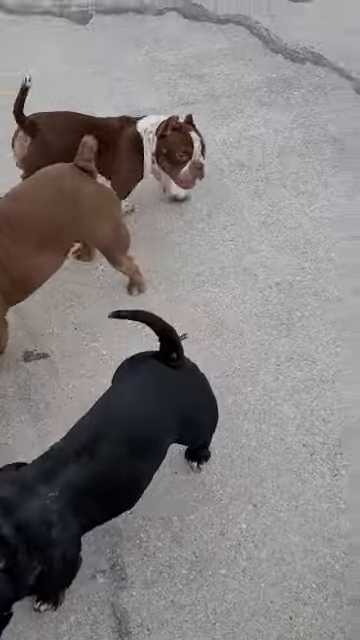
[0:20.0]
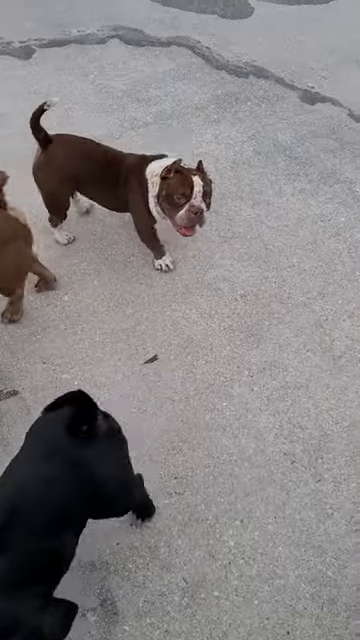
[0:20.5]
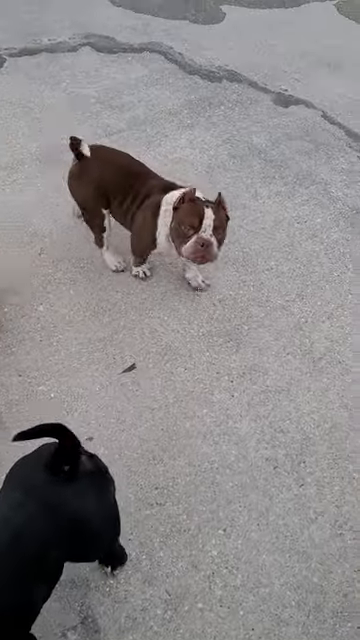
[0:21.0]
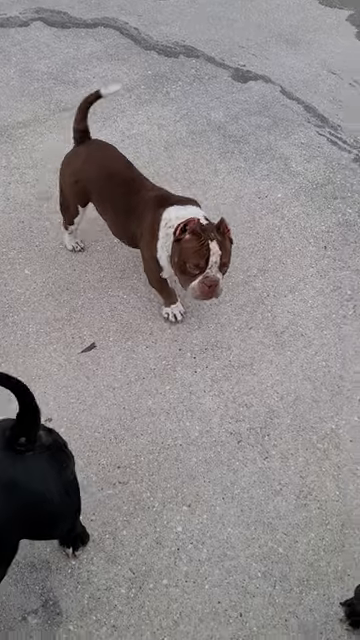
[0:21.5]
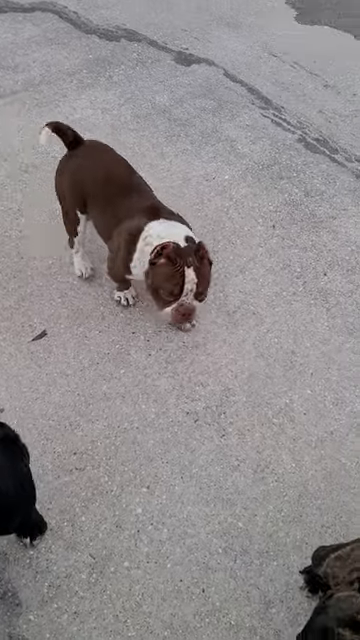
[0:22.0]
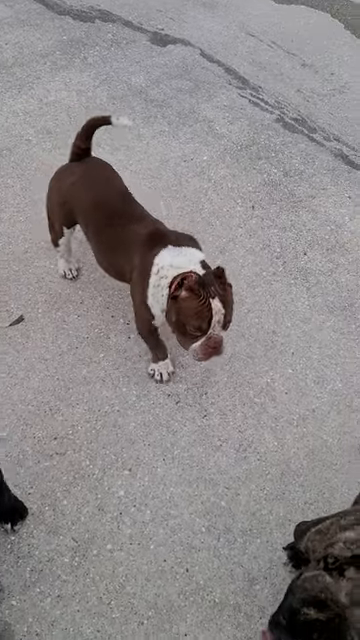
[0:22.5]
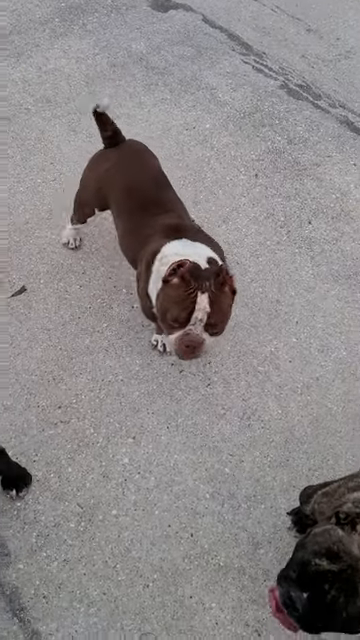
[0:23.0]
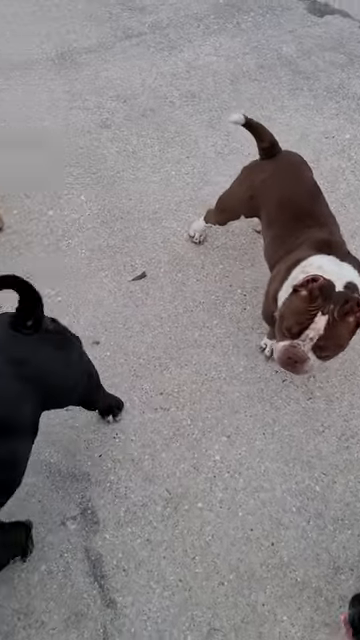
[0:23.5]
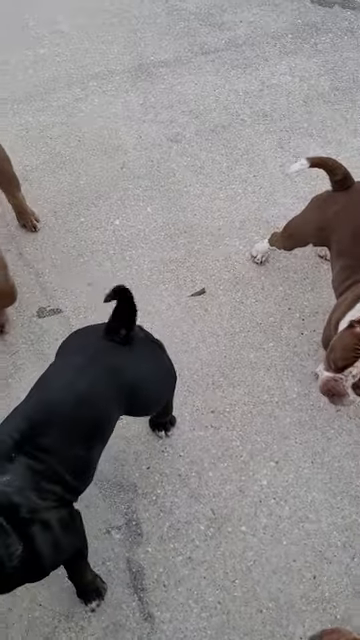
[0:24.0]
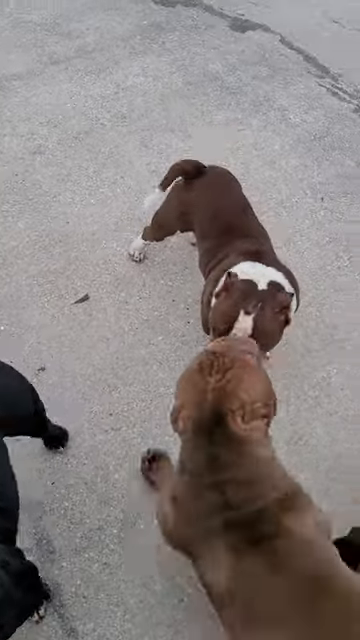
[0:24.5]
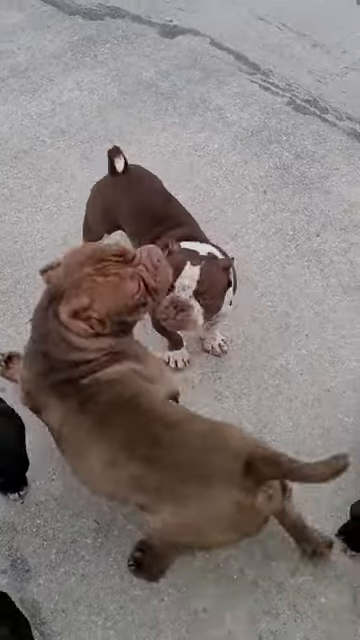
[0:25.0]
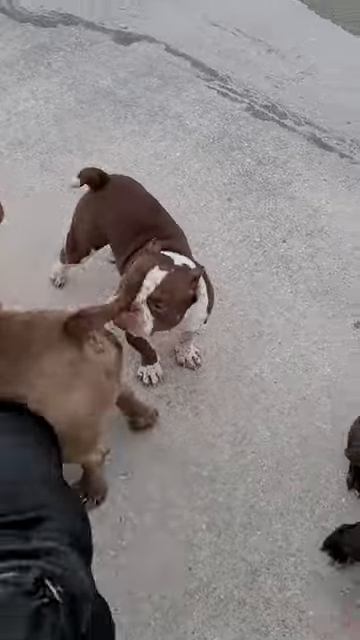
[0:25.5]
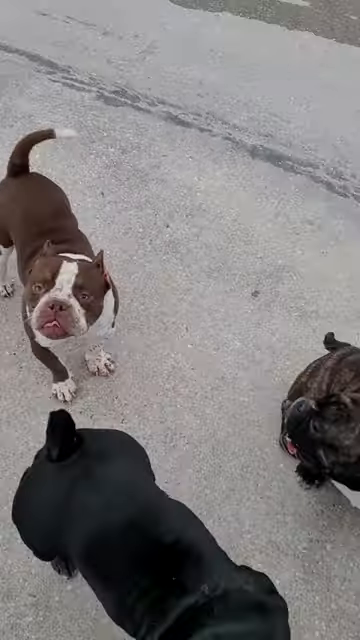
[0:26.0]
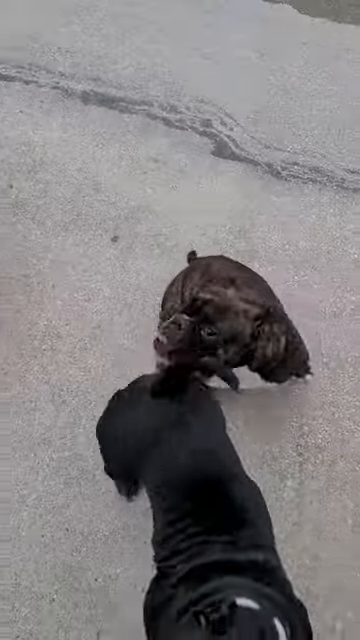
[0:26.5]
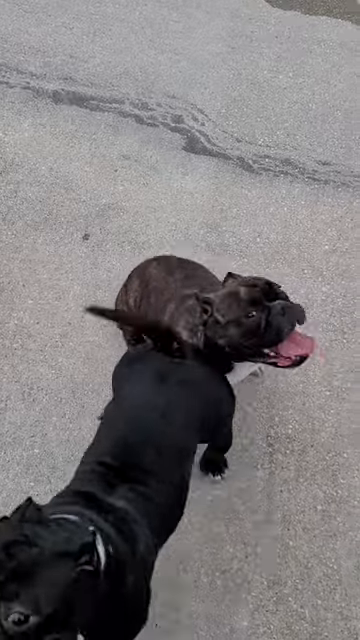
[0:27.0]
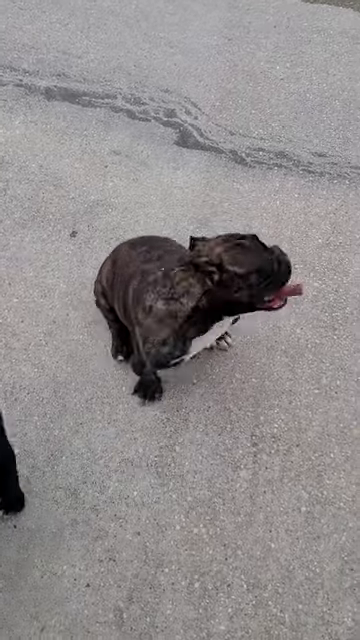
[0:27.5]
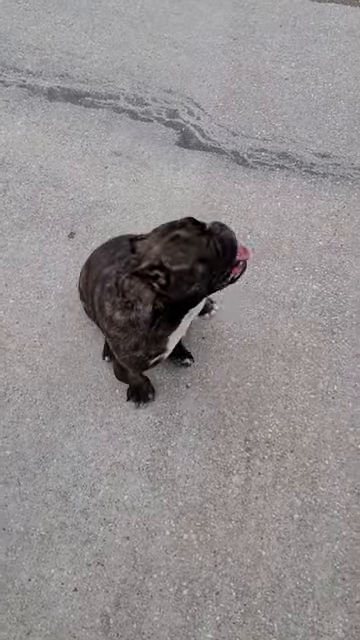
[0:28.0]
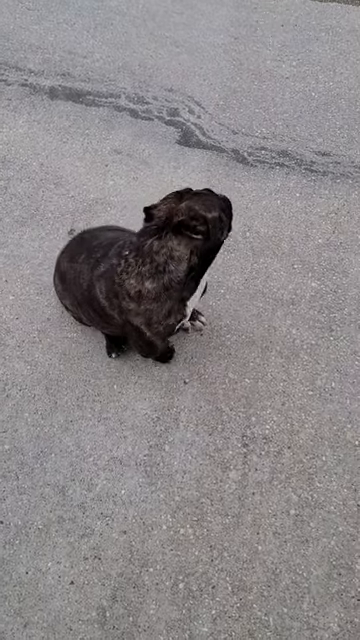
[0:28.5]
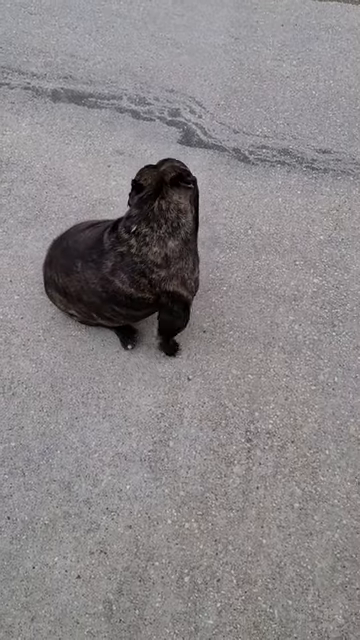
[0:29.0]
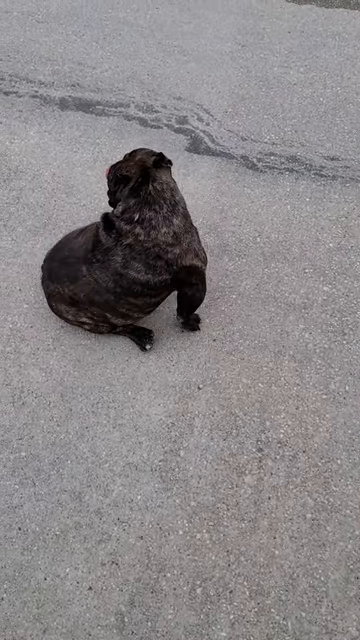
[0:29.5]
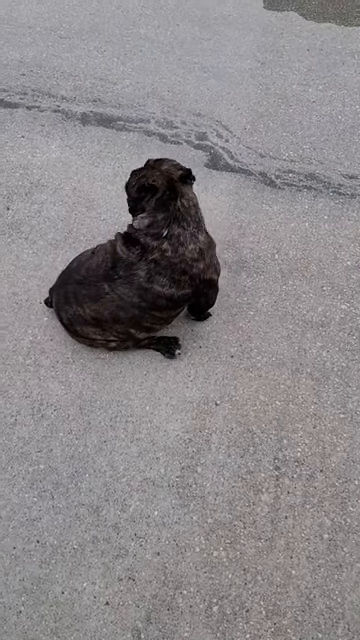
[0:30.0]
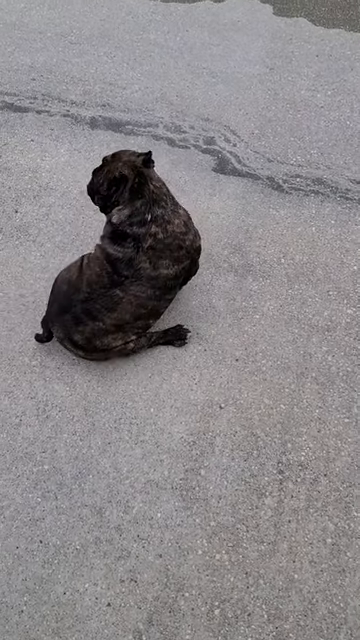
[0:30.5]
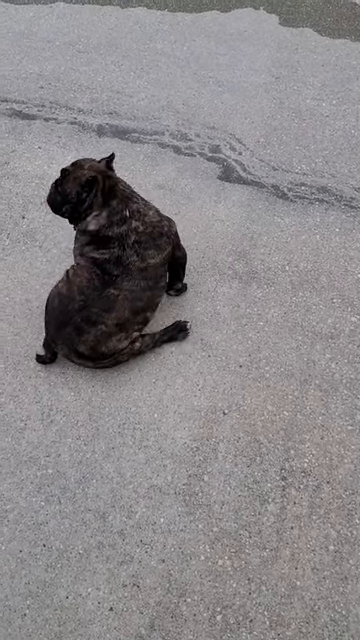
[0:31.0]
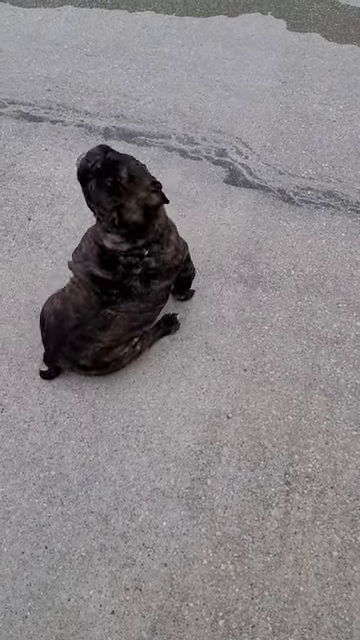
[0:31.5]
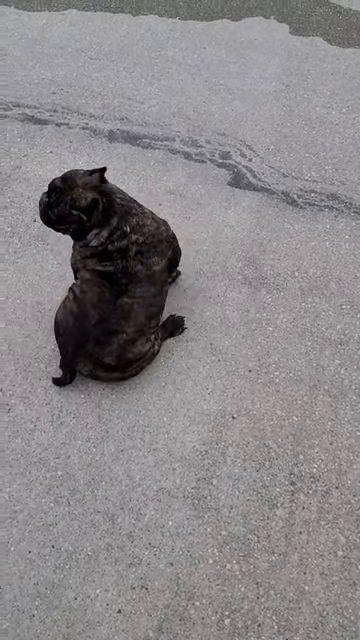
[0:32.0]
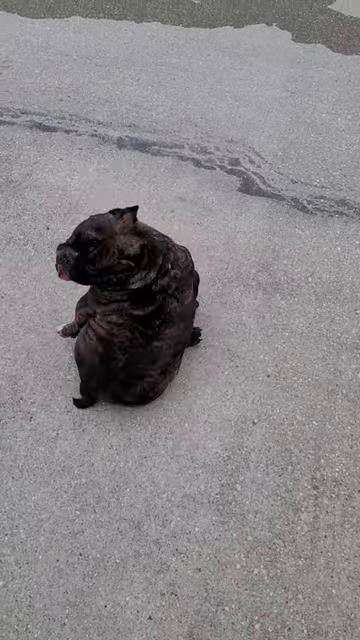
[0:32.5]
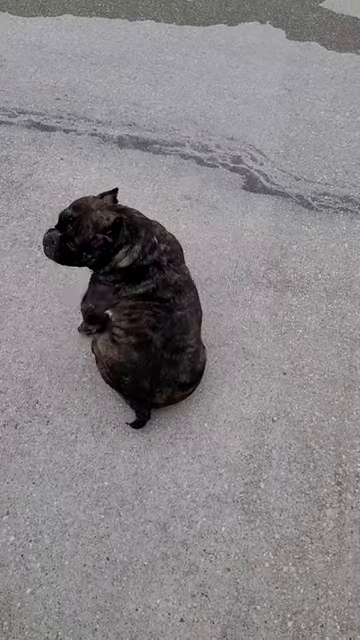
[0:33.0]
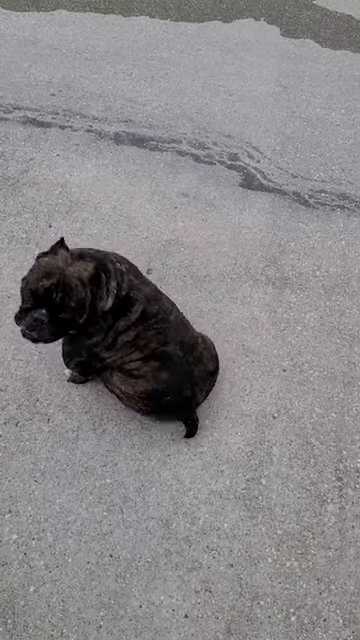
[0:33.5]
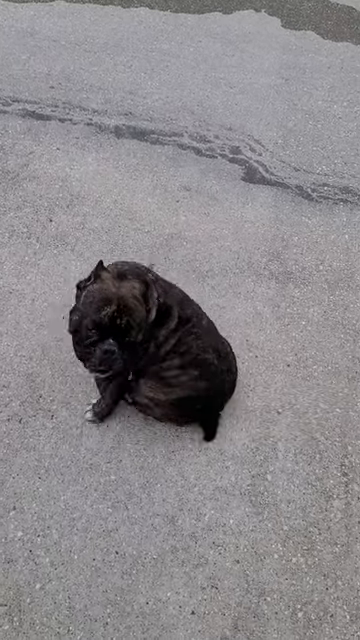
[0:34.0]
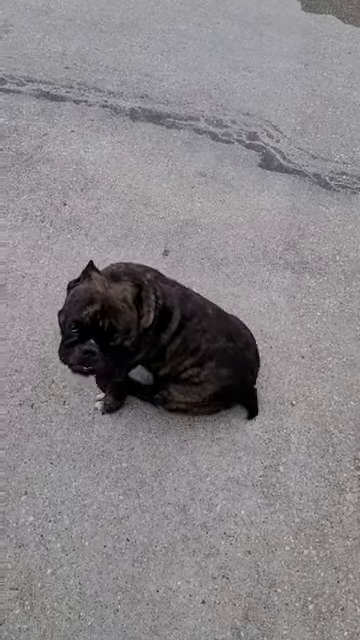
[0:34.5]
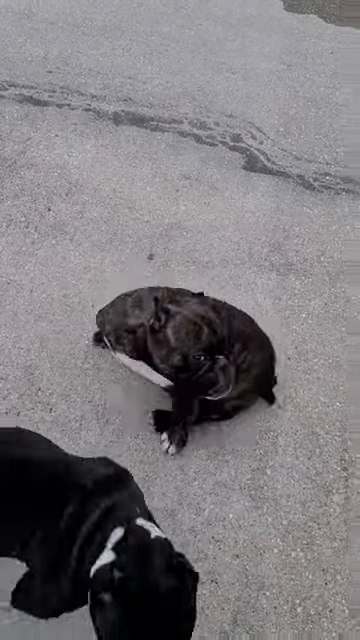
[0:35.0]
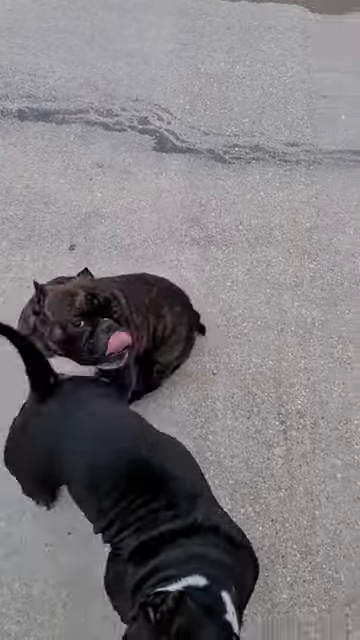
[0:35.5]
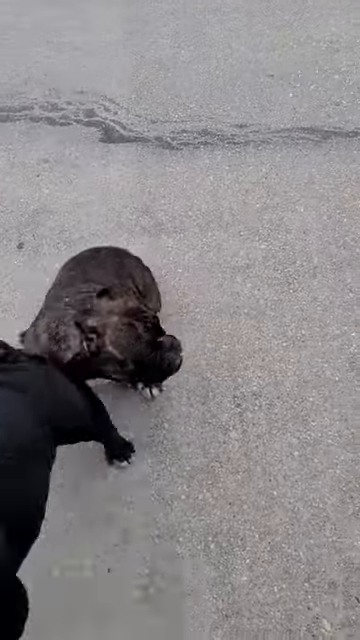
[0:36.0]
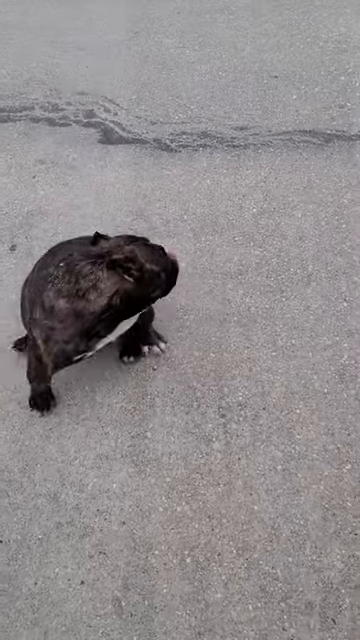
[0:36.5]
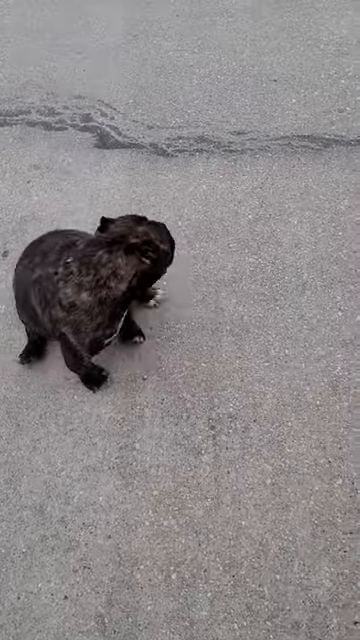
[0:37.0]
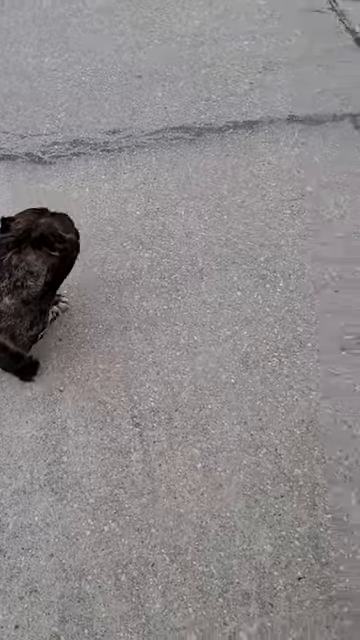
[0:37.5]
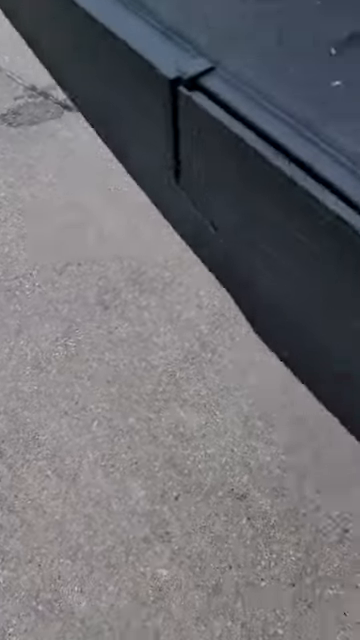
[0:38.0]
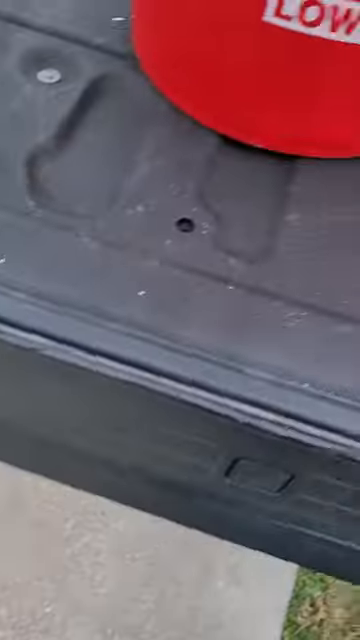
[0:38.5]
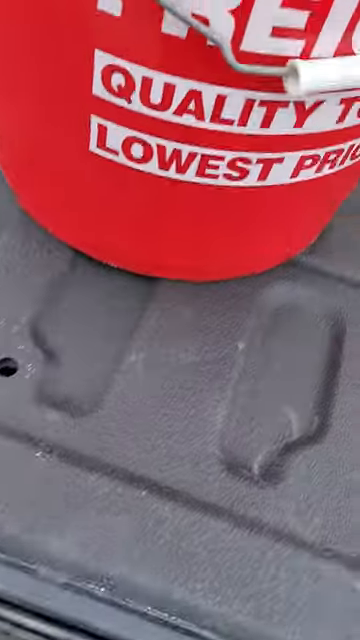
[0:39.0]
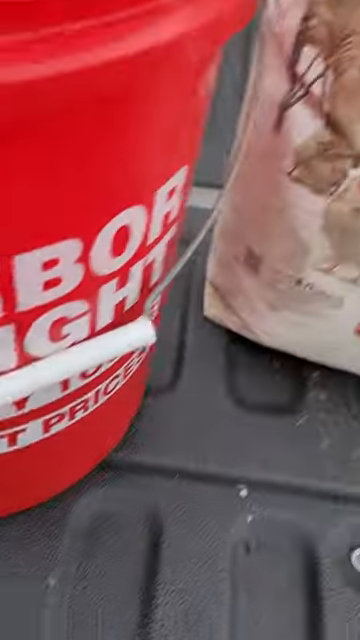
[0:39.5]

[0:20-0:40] A couple of happy dogs are shown outdoors on pavement. One dog, entirely in the frame, is brown with white fur around its neck, face and paws, and it makes its way a little toward the owner. The camera goes left and continues to show the different dogs moving around, looking anxious and happy to see their owner. One of the dogs turns back and seems to scoot on the ground a little; this dog is black and has its tongue out. The dog makes a complete 360 back to its owner, and another dog comes by rapidly wagging its tail. The camera then goes back to the right, showing the open bed of the truck with part of the red bucket and the white bag.